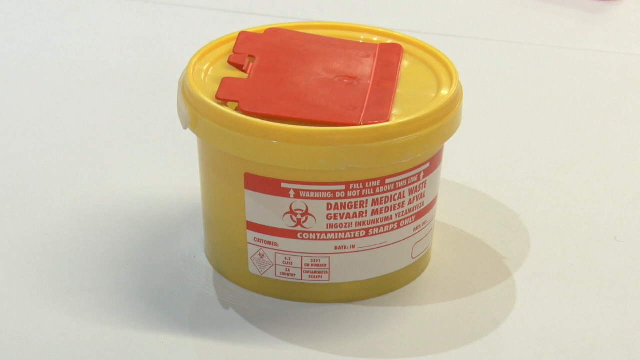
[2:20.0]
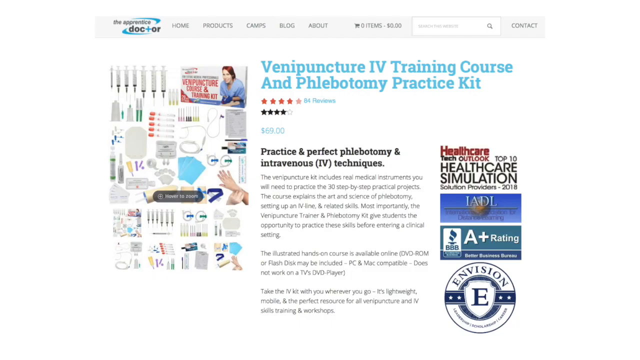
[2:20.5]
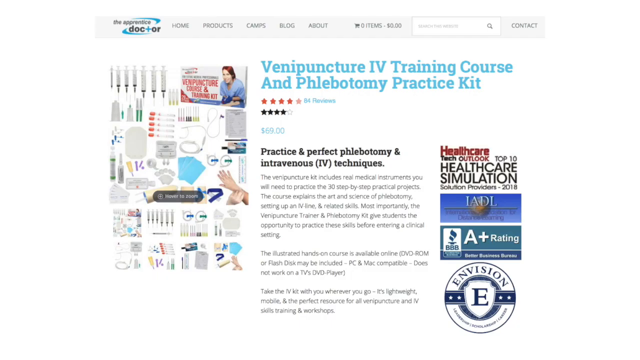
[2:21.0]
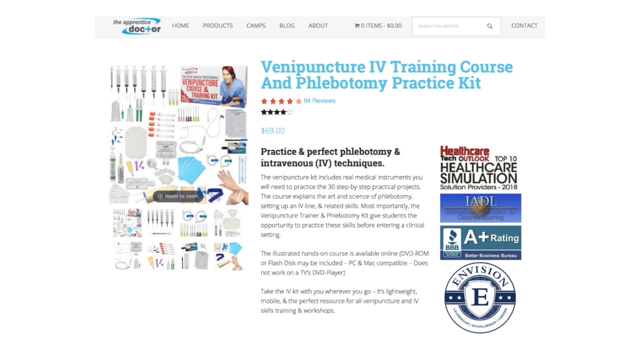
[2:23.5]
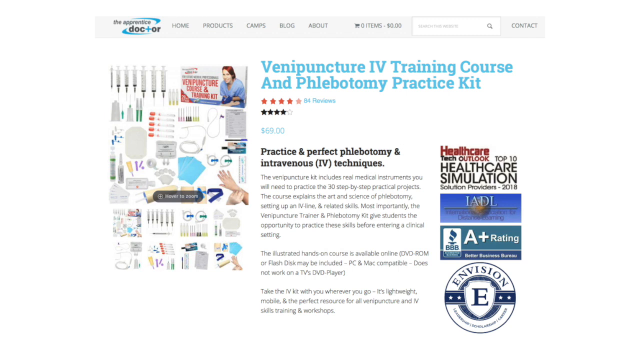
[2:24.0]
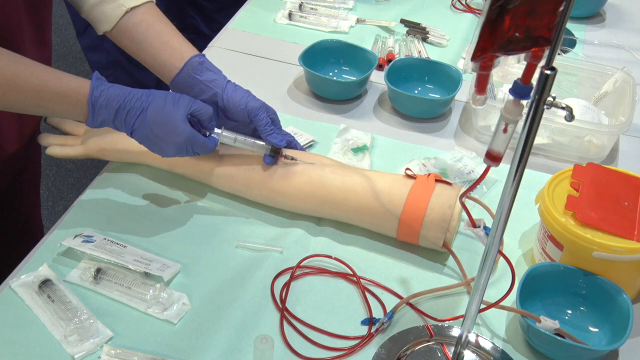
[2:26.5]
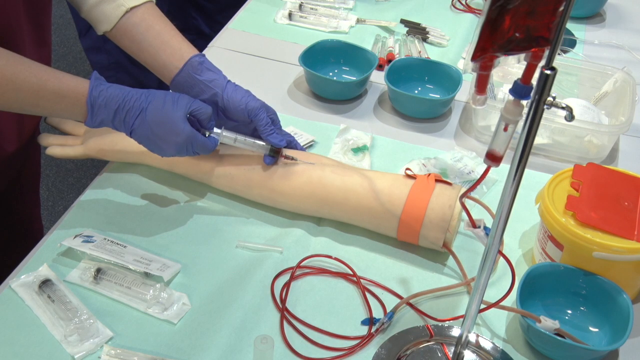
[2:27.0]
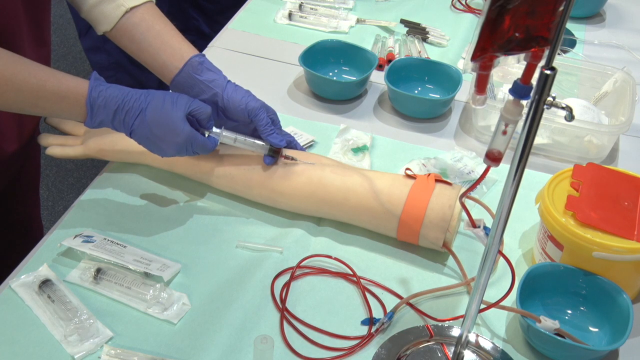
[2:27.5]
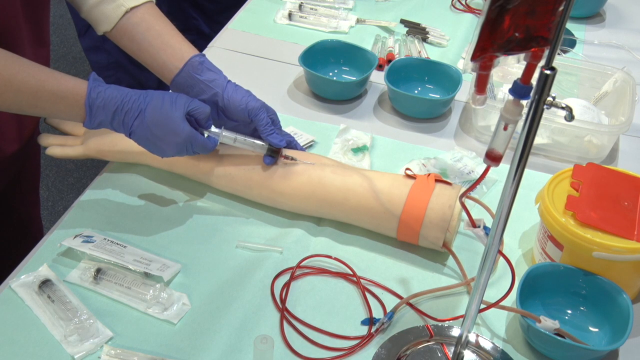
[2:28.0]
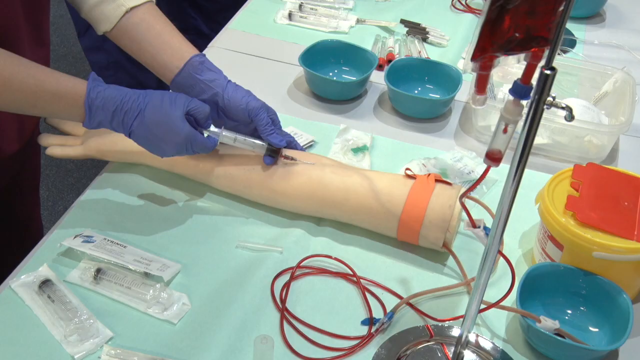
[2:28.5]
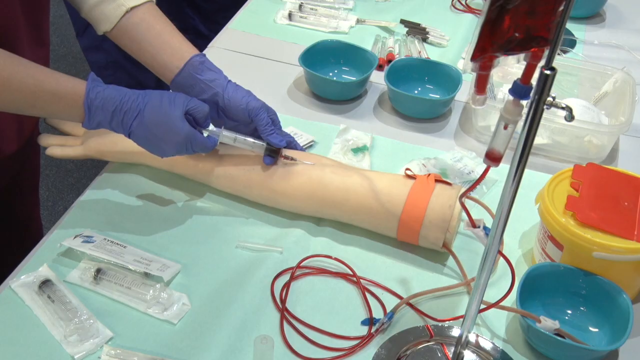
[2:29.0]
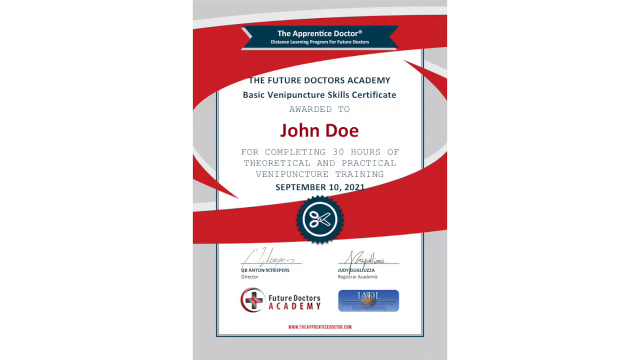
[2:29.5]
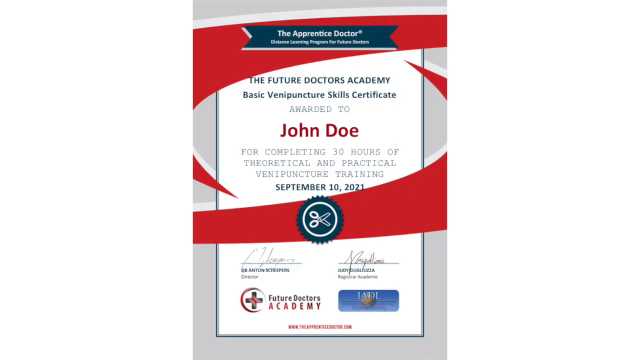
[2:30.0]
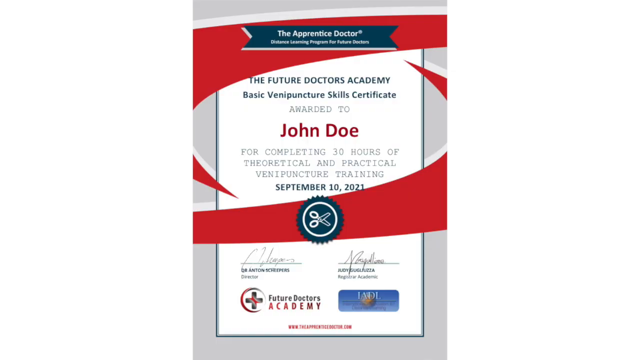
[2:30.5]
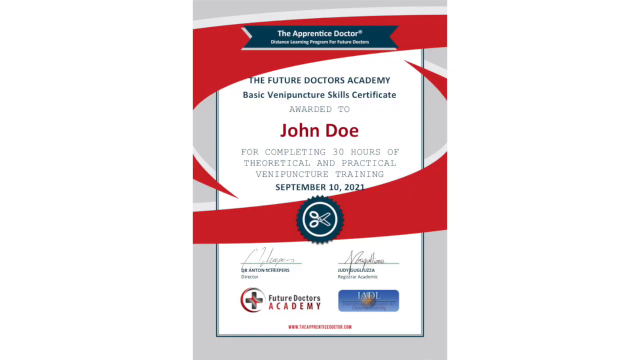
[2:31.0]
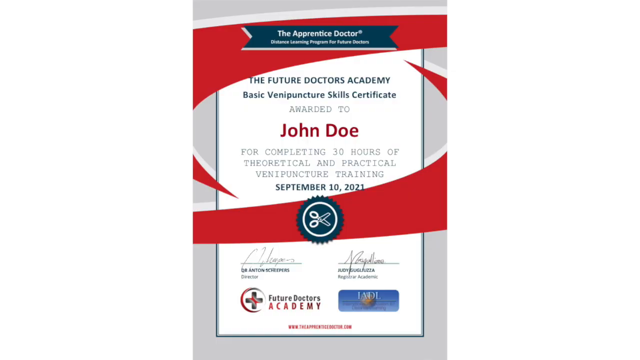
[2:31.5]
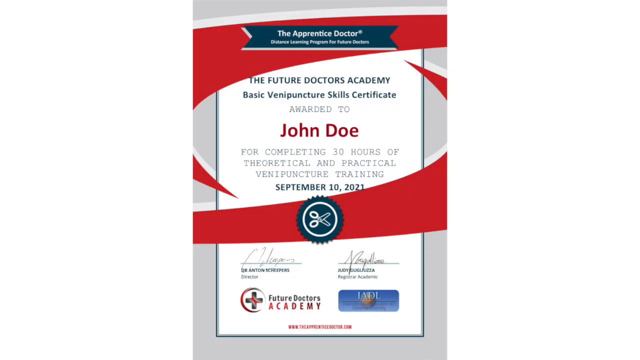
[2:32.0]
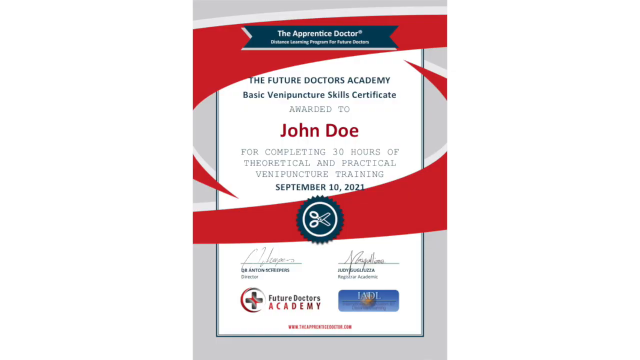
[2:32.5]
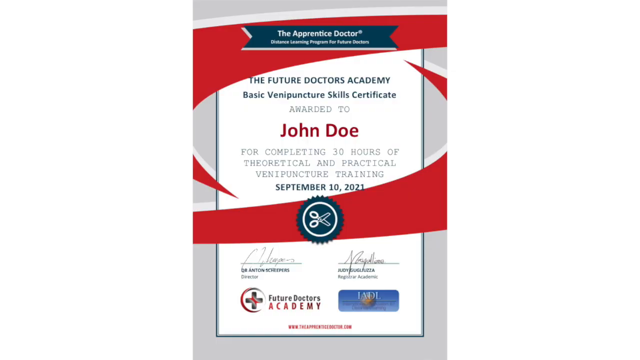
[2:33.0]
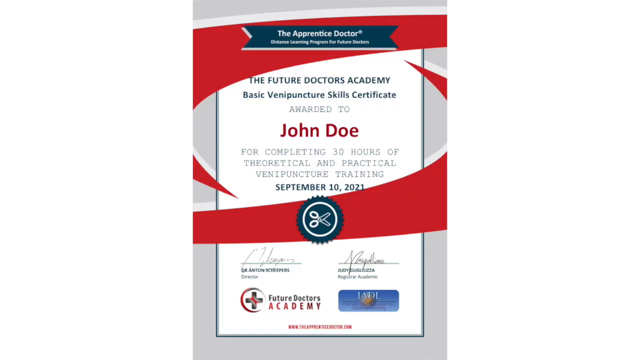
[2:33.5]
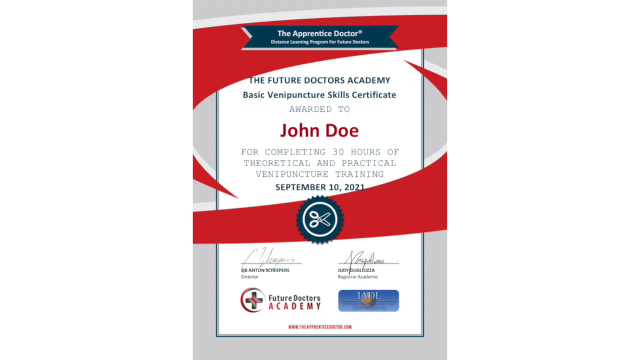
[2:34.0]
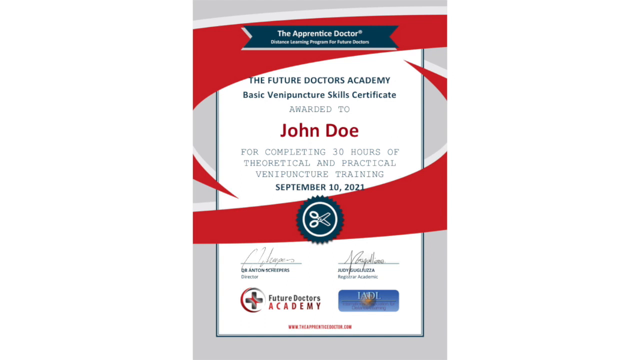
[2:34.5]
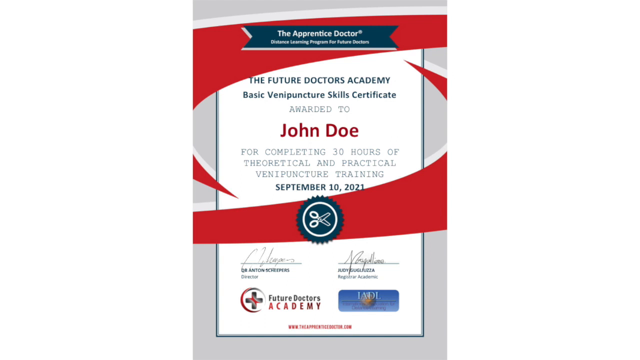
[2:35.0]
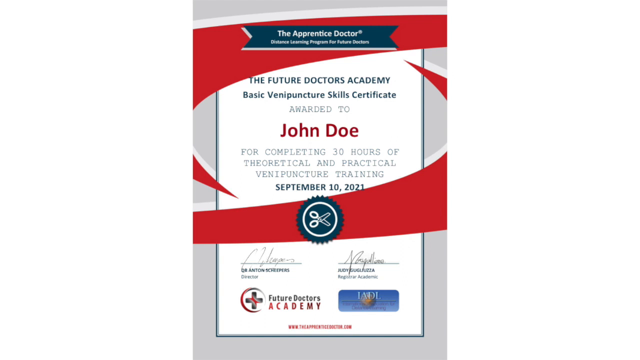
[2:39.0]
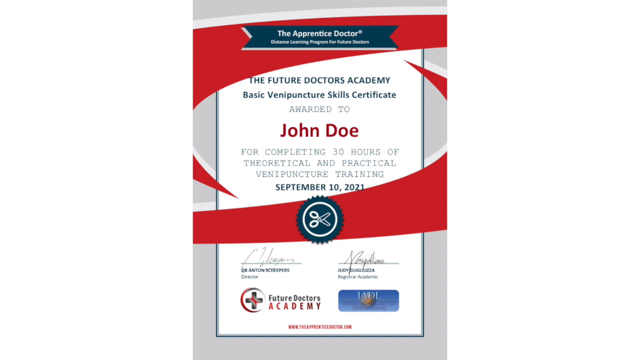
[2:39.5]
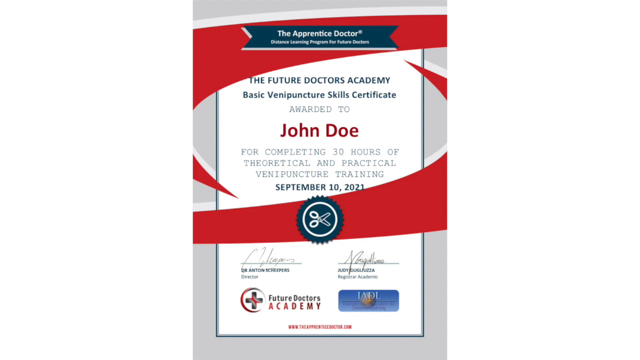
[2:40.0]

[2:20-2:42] On a white table is a small round yellow plastic container with a lid. On the front is a white and red label reading "danger, medical waste", along with other warning messages and a biohazard sign. At the top, a red square piece is attached to the lid, possibly some type of cover. The scene changes to what looks like The Apprentice Doctor website, showing a product page for the venipuncture IV training course and phlebotomy practice kit, with 84 reviews, 4 out of 5 stars and a price of $69. On the left is an image of the product showing many included medical supplies such as syringes, tubes and little bottles. There is a product description along with certifications from organizations such as the Better Business Bureau, IADL and Envision. Next, what looks like a person draws blood from a dummy medical arm. A silver stand holds a bag of blood next to it, which appears to drip blood into a tube that runs through a long, skinny clear wire into the dummy arm. Finally, an image shows what looks like some type of certificate, the Future Doctors Academy basic venipuncture skill certification, awarded to John Doe for completing 30 hours of theoretical and practical venipuncture training, awarded September 10th 2021 by the Future Doctors Academy.